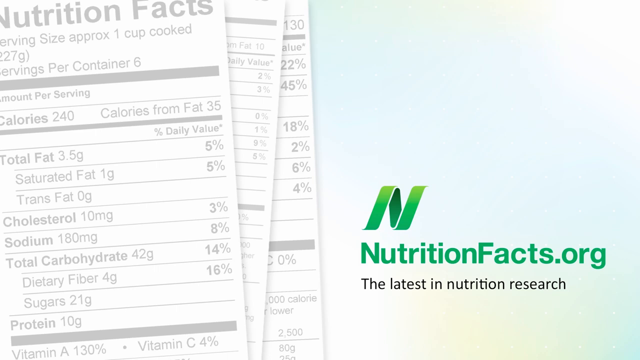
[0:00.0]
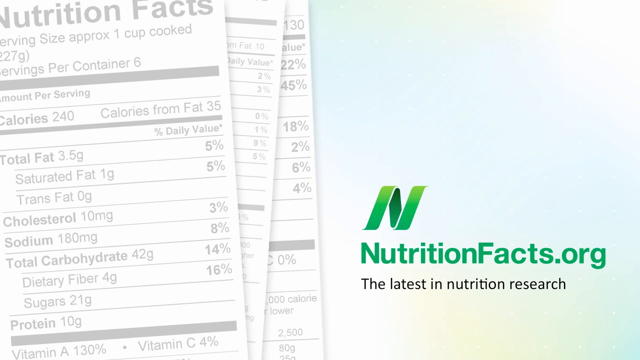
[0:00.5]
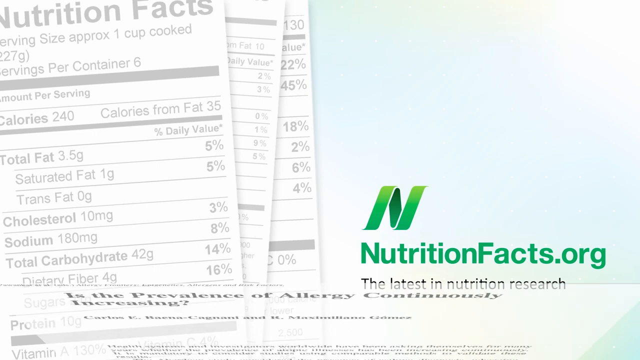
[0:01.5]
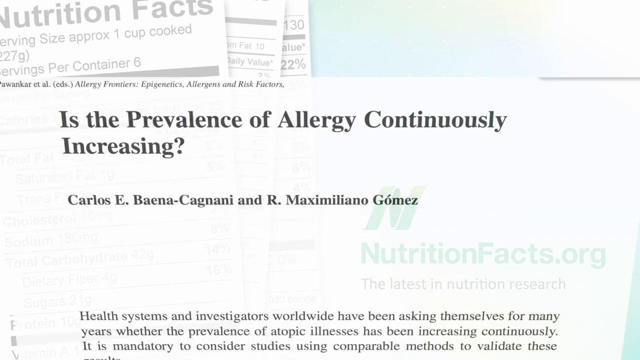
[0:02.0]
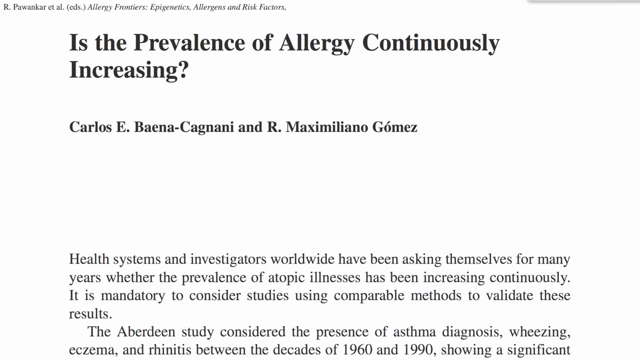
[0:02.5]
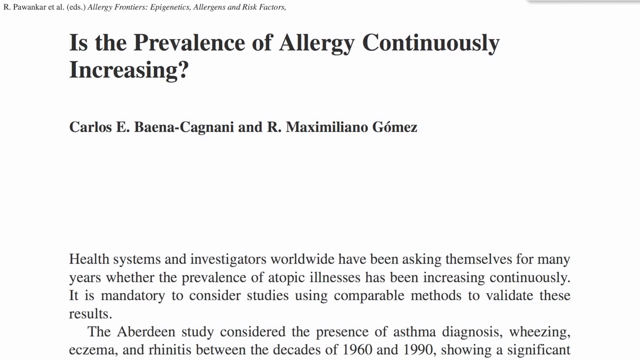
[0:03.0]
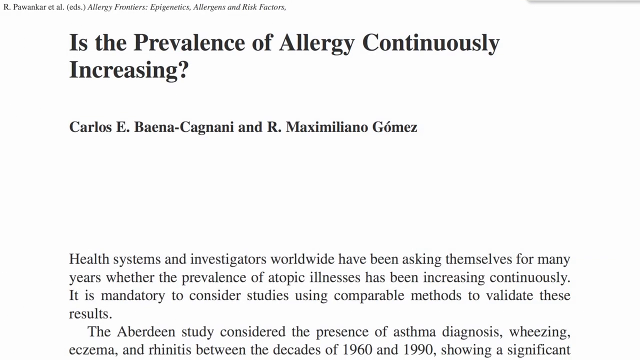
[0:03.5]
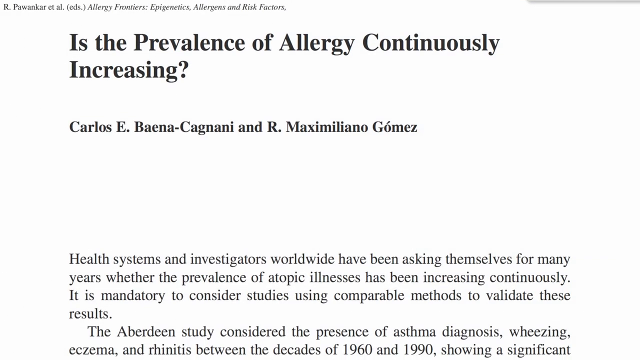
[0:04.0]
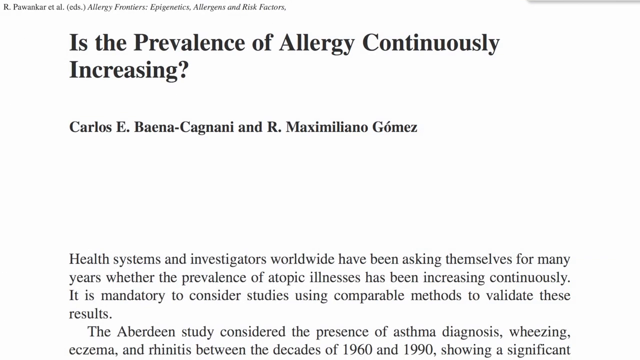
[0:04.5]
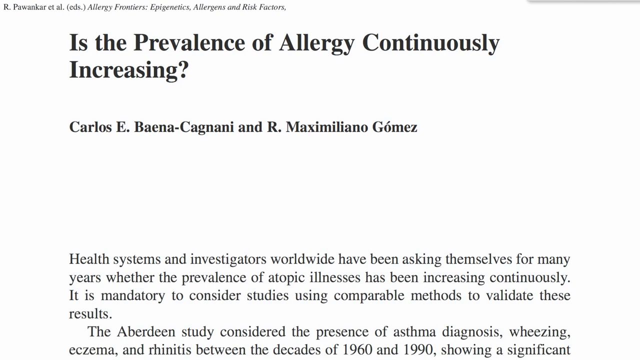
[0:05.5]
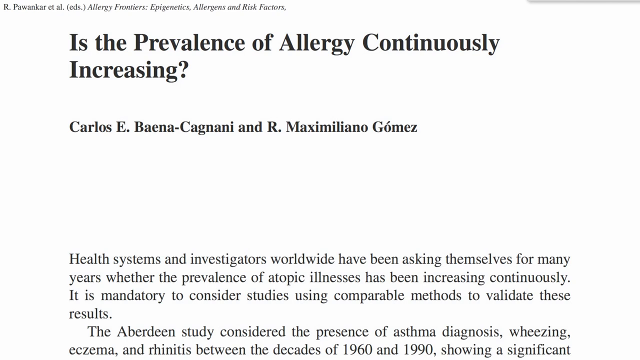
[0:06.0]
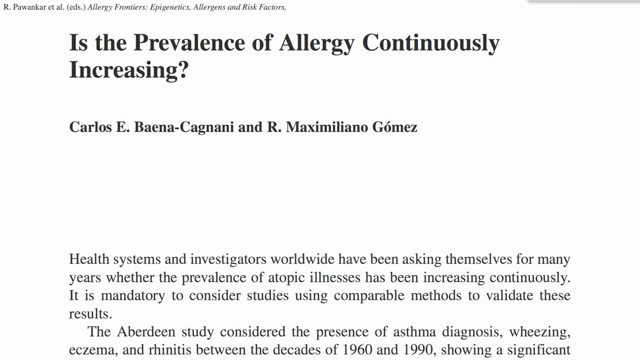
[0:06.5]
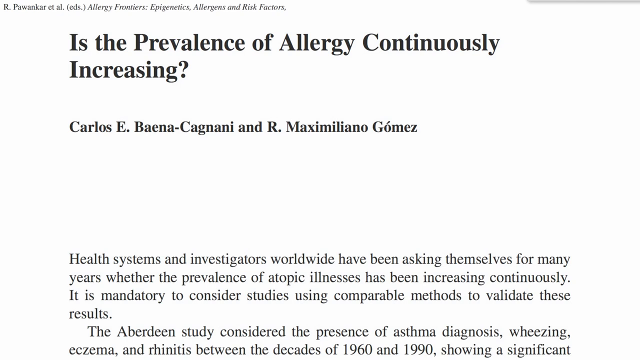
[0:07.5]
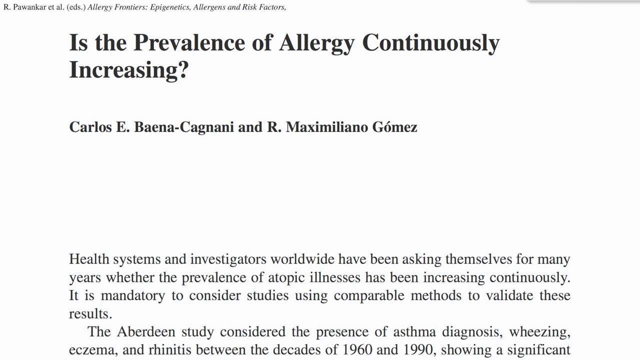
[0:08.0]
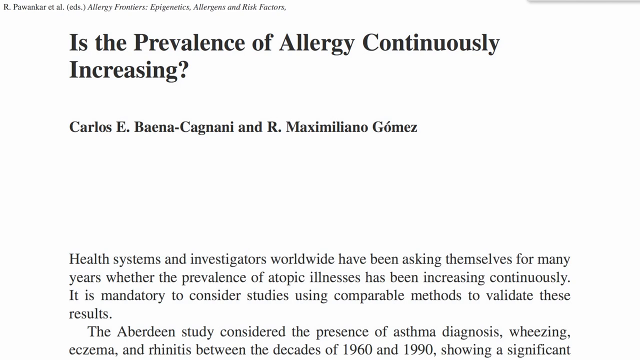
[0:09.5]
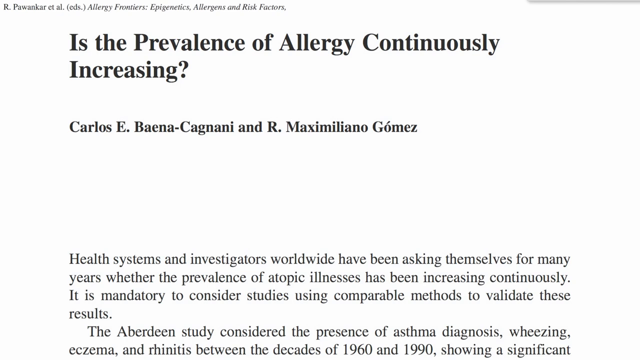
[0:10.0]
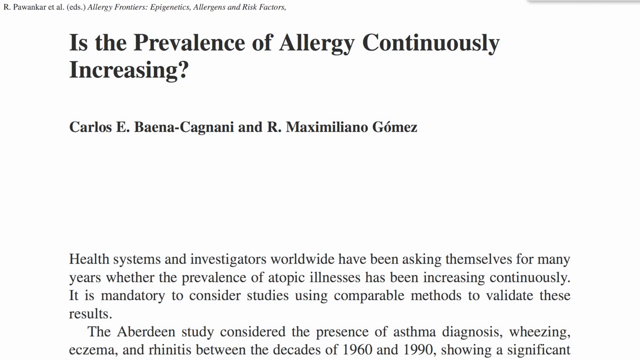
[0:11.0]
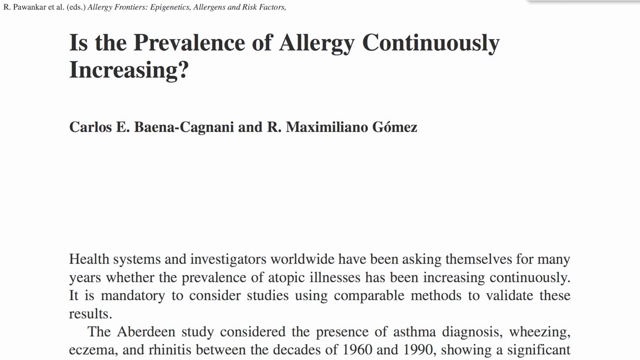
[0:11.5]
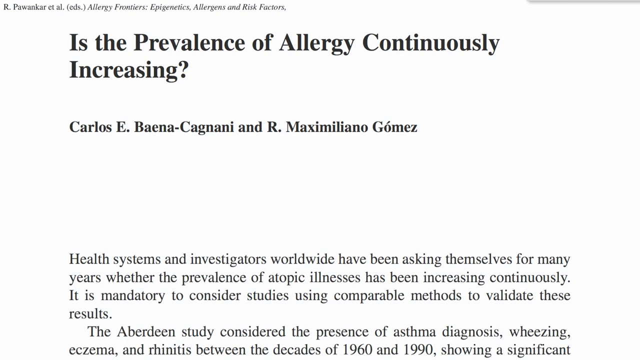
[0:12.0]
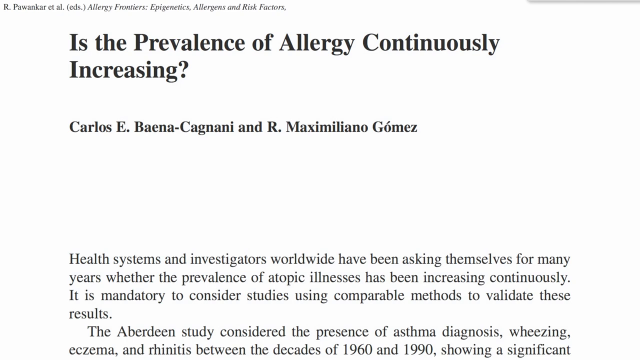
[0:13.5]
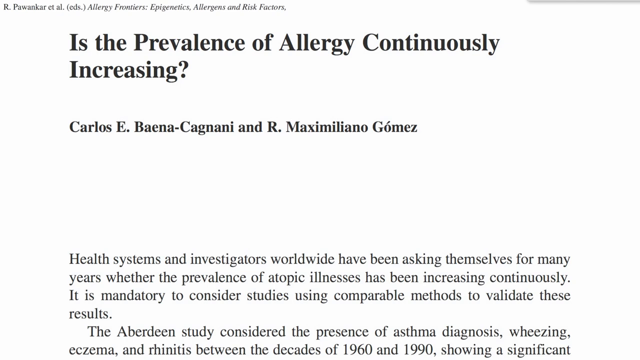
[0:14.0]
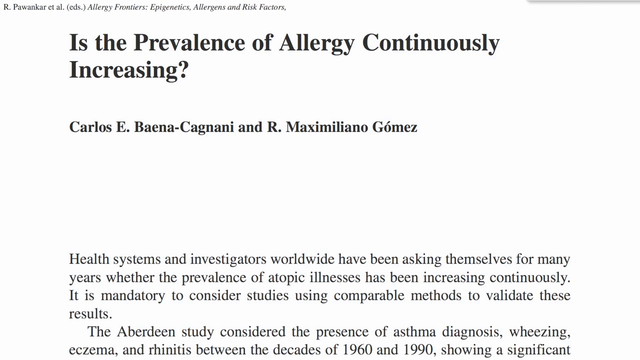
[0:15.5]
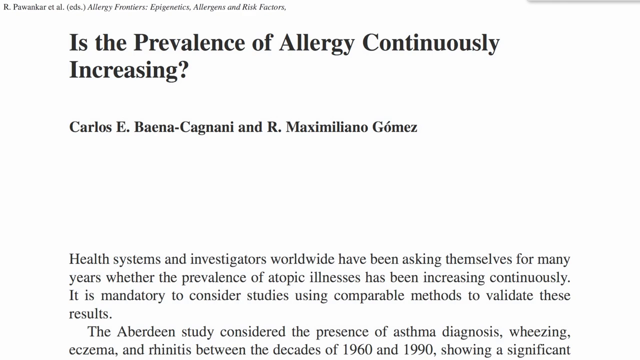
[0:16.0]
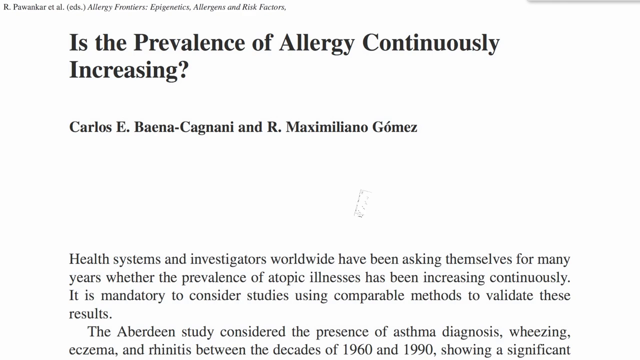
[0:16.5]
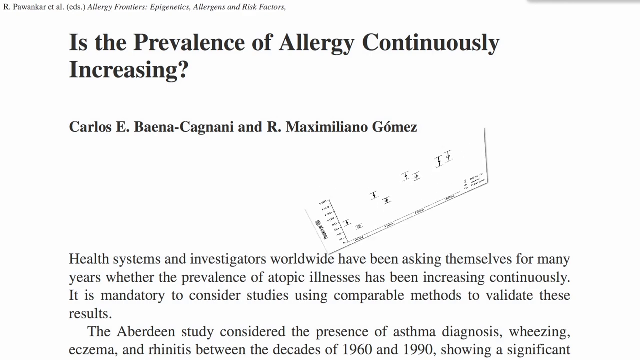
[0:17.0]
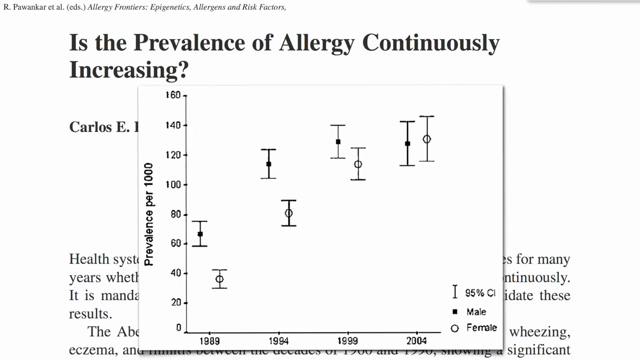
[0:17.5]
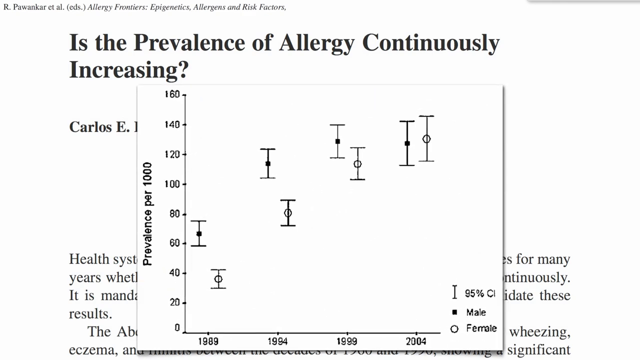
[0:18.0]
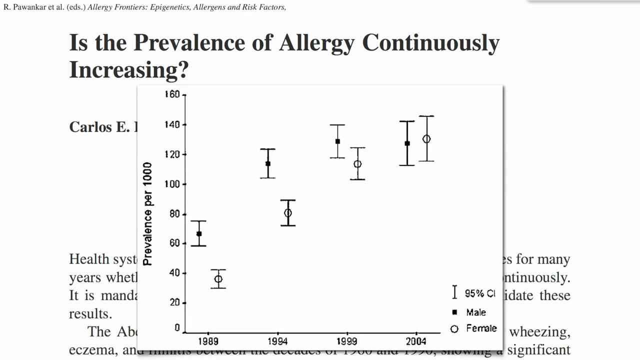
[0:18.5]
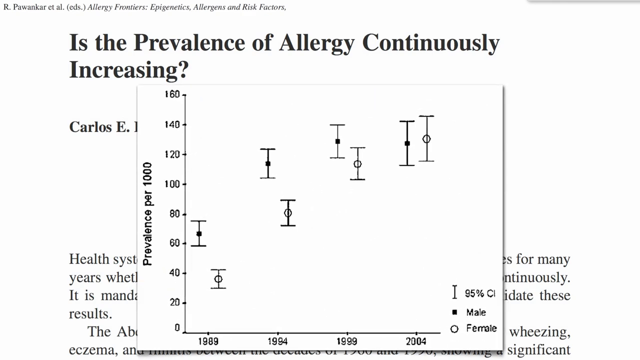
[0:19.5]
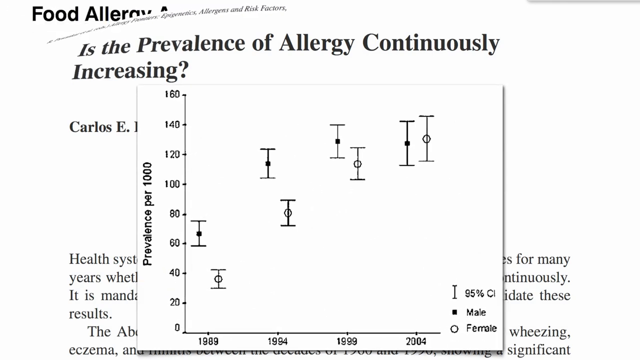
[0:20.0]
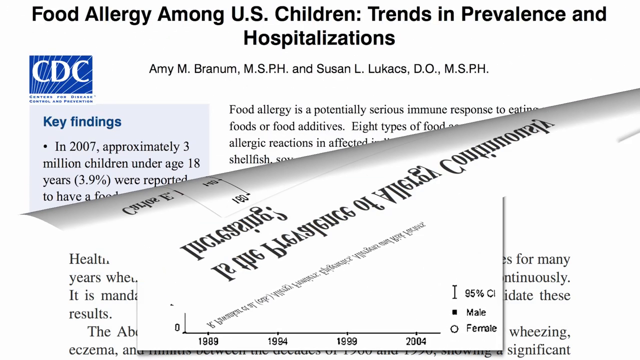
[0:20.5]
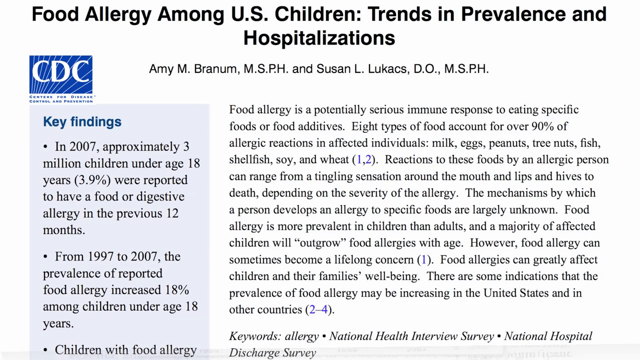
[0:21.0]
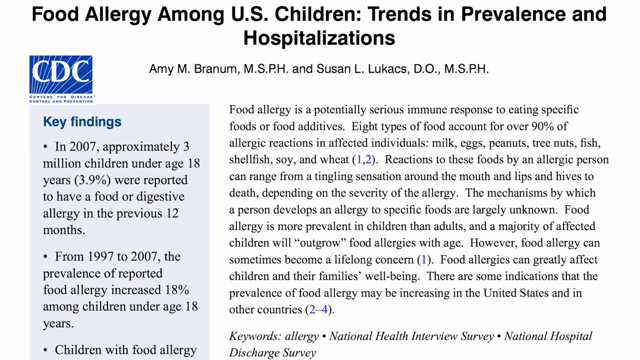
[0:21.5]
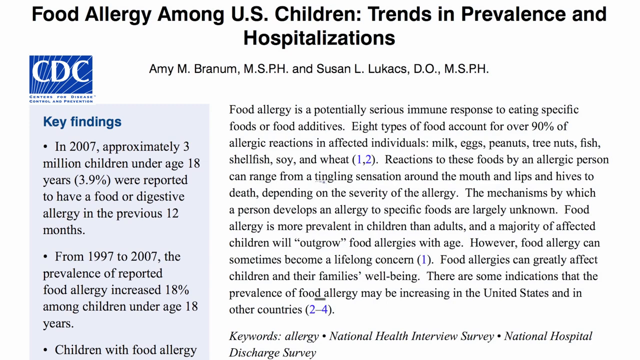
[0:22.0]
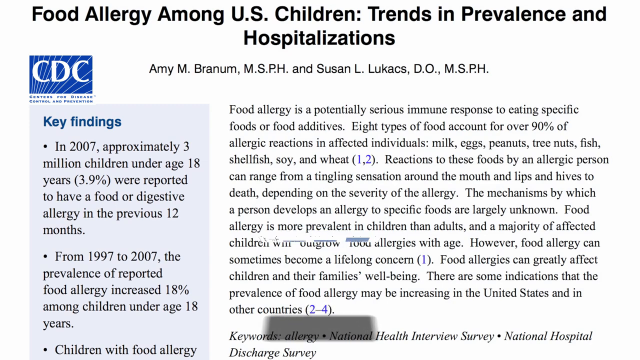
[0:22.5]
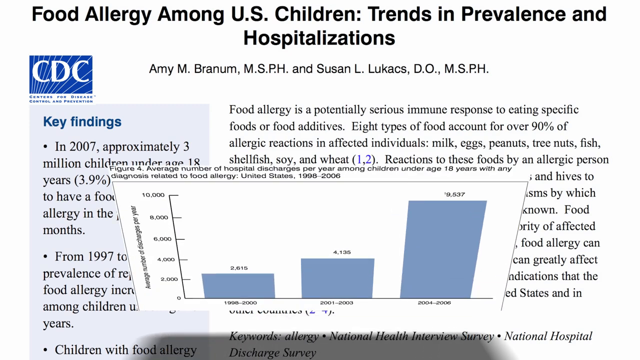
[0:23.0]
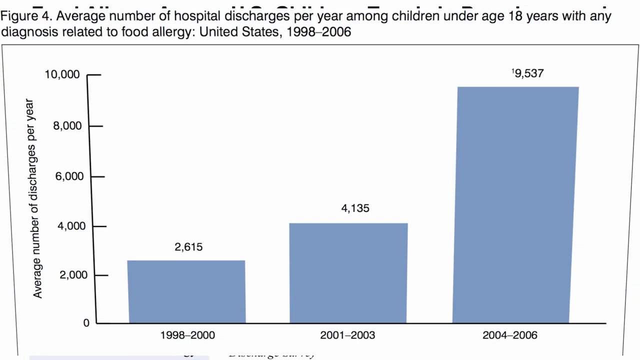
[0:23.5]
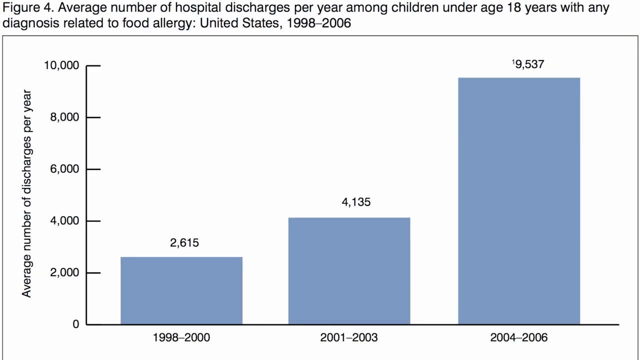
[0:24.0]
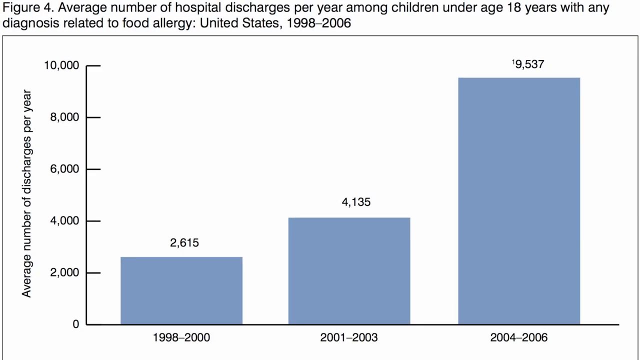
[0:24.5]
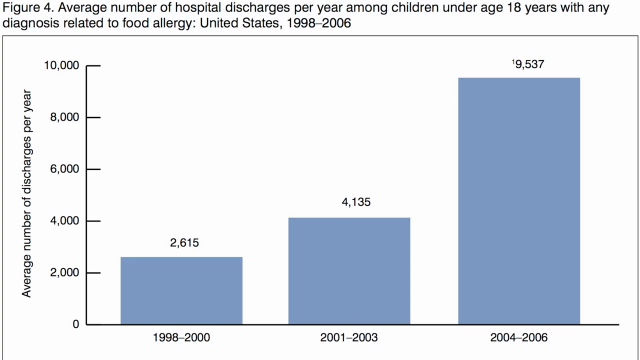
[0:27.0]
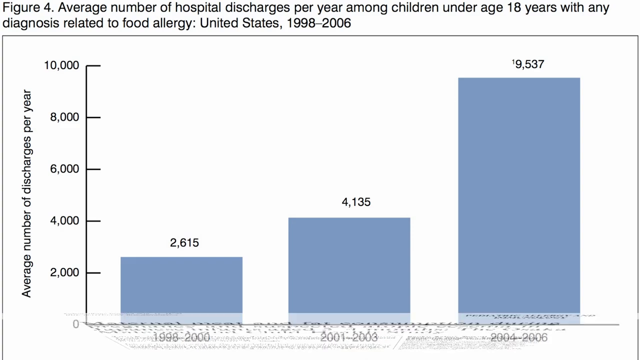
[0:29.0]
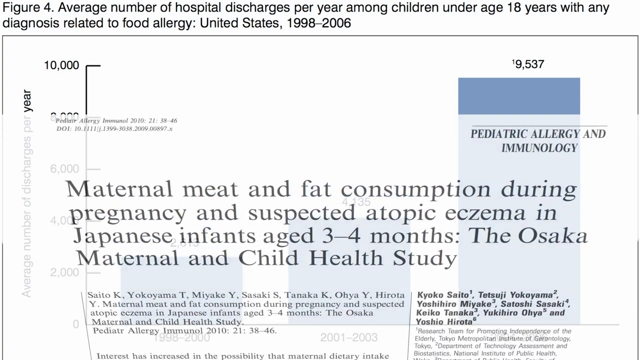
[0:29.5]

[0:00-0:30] The video opens with the nutritionfacts.org branding. The logo is displayed in green lettering in the bottom right-hand corner, and above it is a piece of tape made into a letter N. Underneath the logo, in black lettering, is "the latest in nutrition research." The screen has a pale grey-blue background, and on the left-hand side are three receipt-like documents layered on top of one another, each in faded print reading "nutrition facts" with a list of nutritional information. The video then moves to an academic study laid out in an academic format, with "R Pawankar et al Allergy Frontiers Epigenetics Allergens and Risk Factors" in italics in the top left-hand corner. Below is the bold, enlarged black title "is the prevalence of allergy continuously increasing," followed by the authors' names and the beginning of the first paragraph of the paper in a standard Times New Roman style font. The screen then changes to further documentation: a graph in a pop-up window with allergy figures illustrating how both male and female allergies are increasing over time.